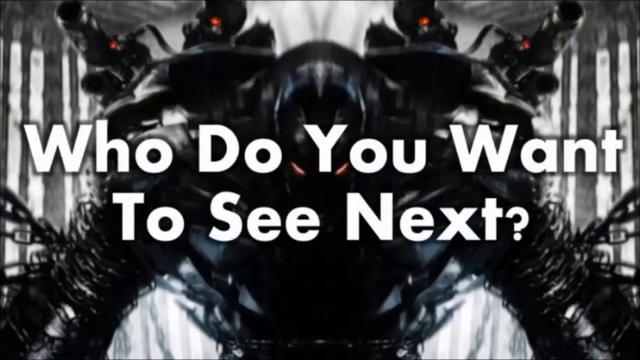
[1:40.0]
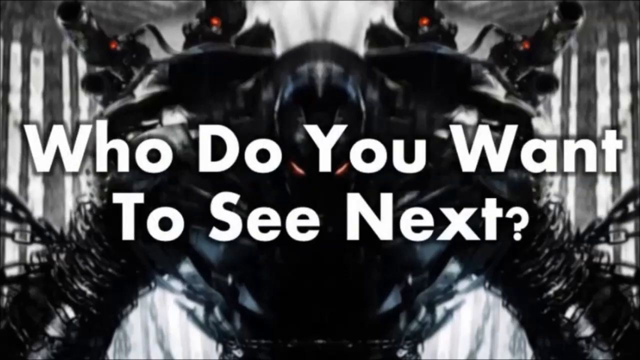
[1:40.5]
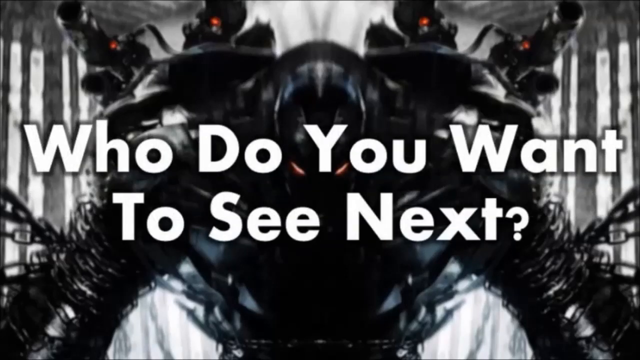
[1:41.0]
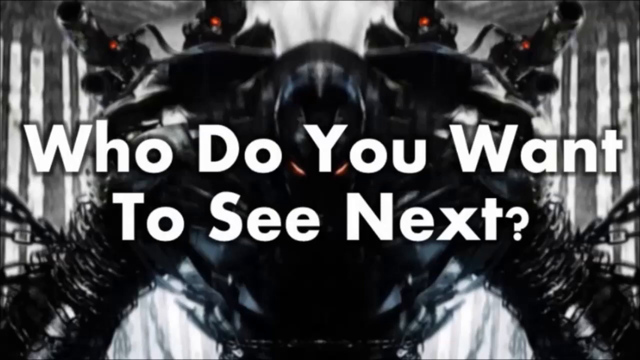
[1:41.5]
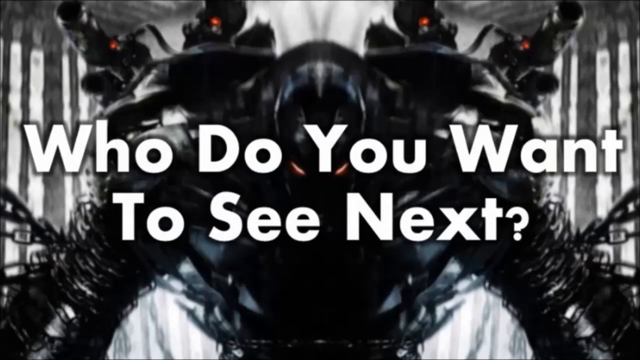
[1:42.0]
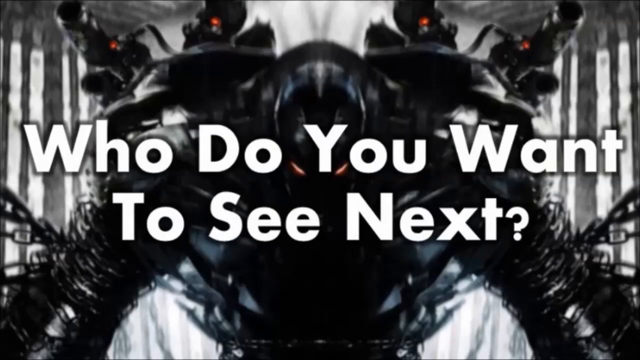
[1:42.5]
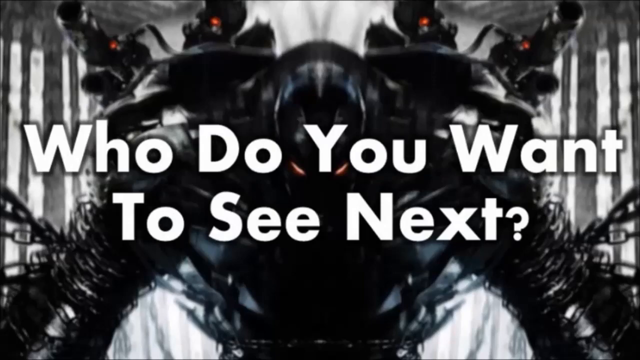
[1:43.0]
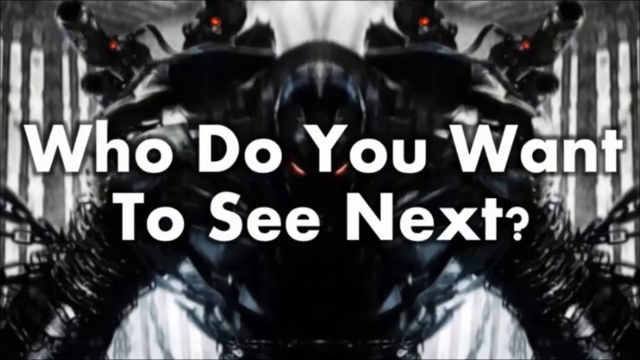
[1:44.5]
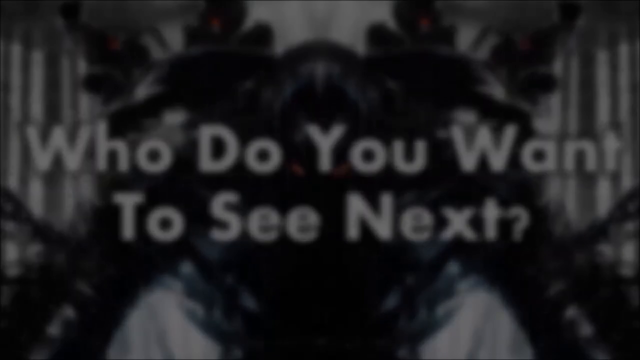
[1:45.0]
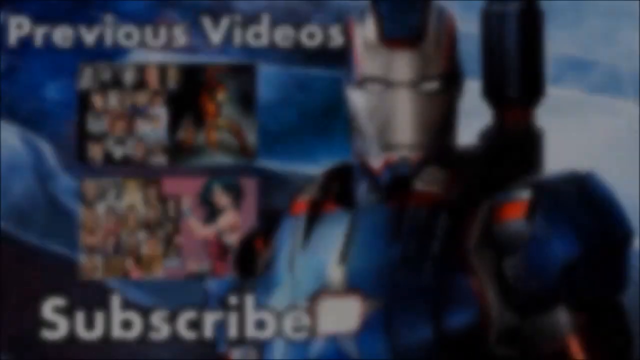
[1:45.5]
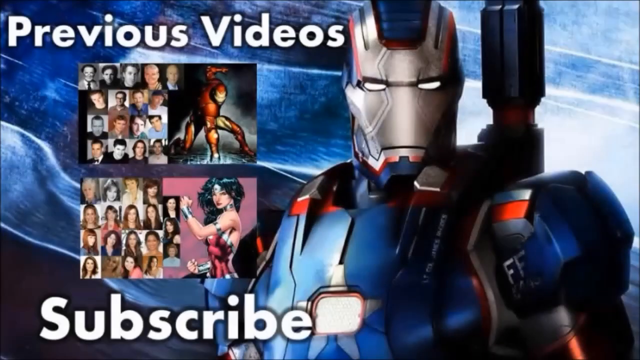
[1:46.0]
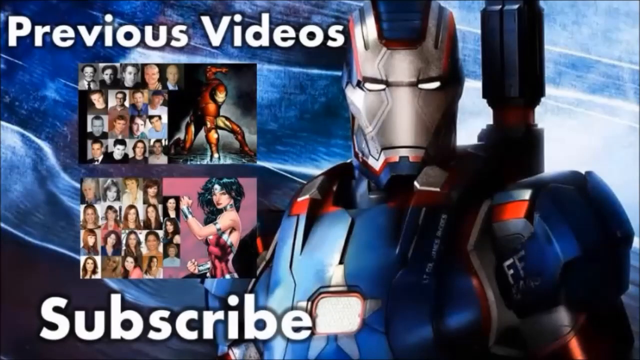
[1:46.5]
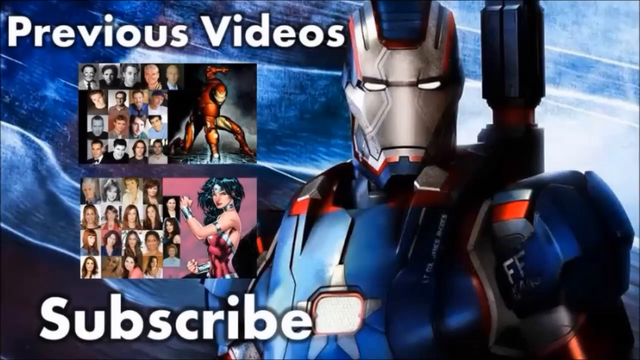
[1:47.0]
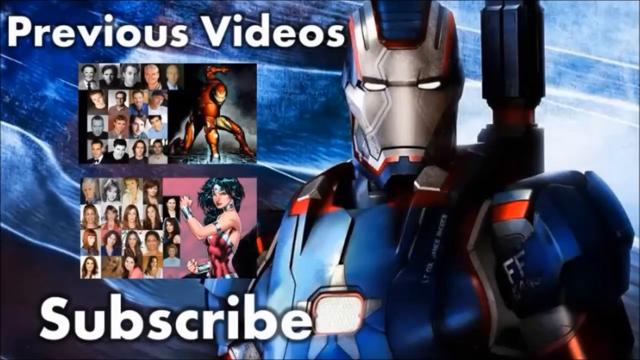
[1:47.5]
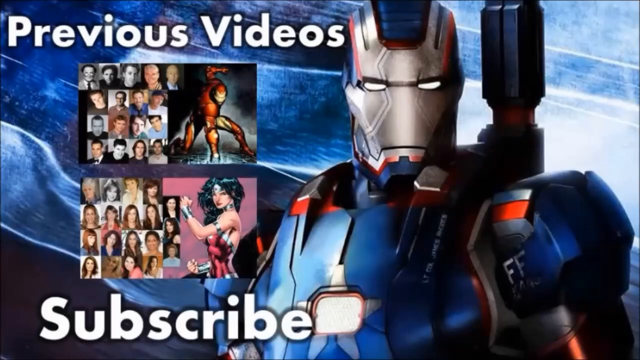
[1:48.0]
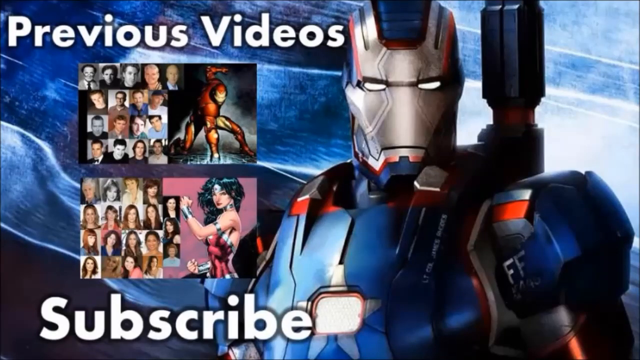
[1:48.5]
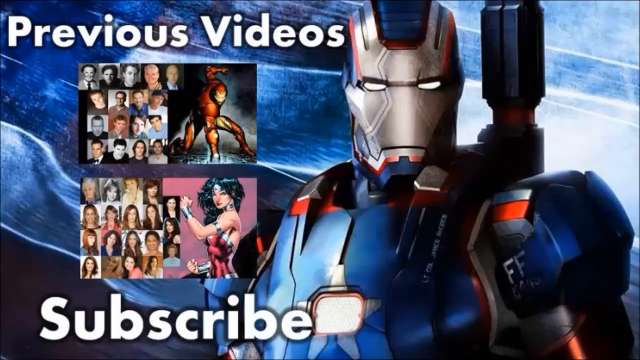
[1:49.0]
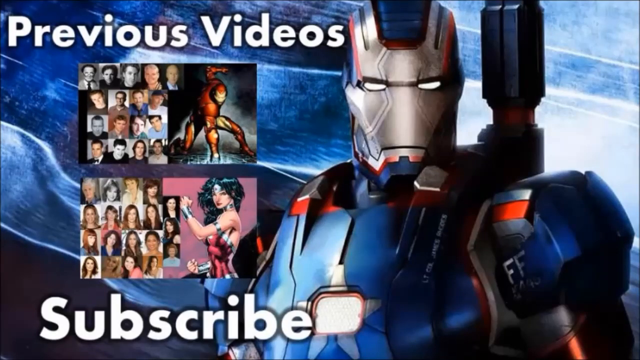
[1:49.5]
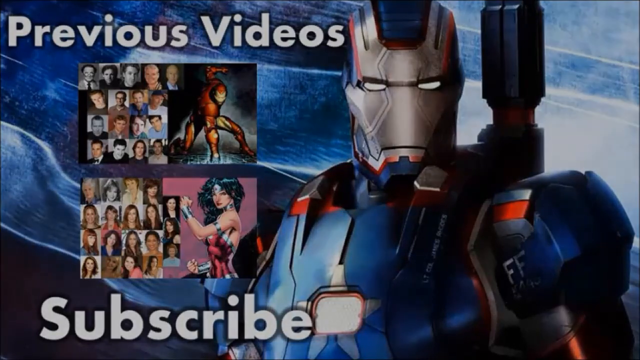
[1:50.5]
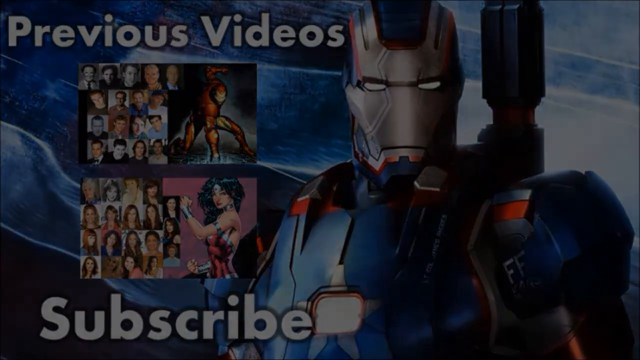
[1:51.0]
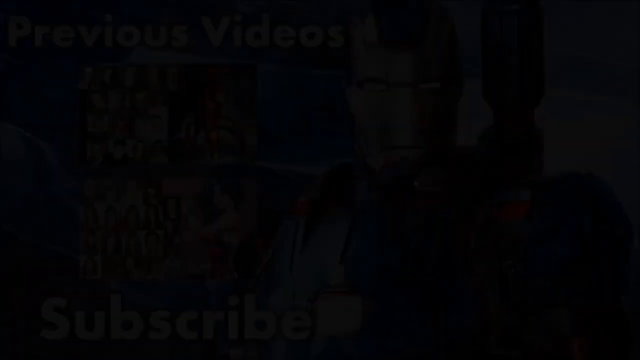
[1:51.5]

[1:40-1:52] The screen asks what the viewer's favorite war machine is, then asks "what do you want to see next." The video pans into what looks like a banner of Iron Man in a blue and red design that looks Captain America inspired. Two images appear in the middle of the screen with white titles of previous videos: one is Iron Man, and the other shows a woman and a bunch of guys. At the bottom is "subscribe," and the screen turns black.